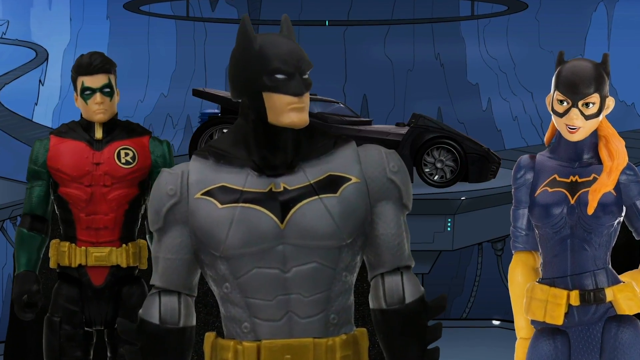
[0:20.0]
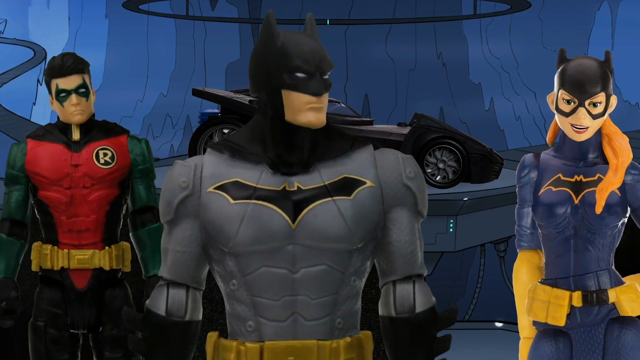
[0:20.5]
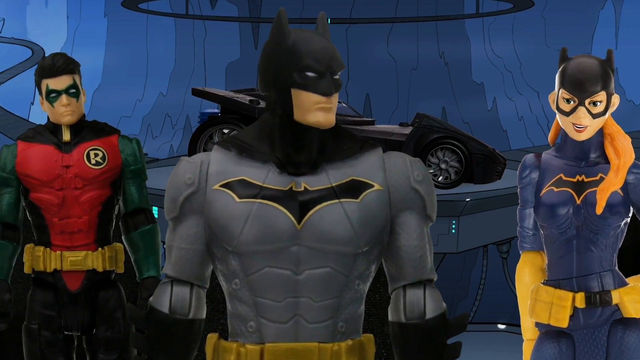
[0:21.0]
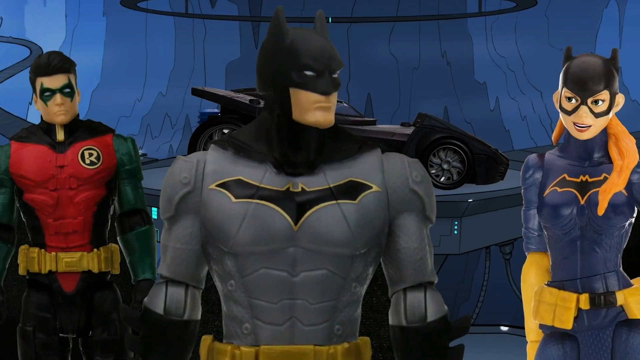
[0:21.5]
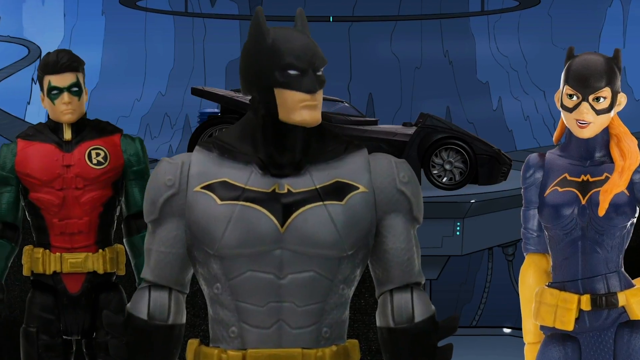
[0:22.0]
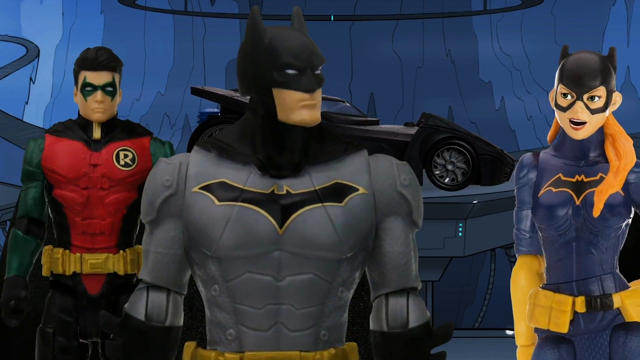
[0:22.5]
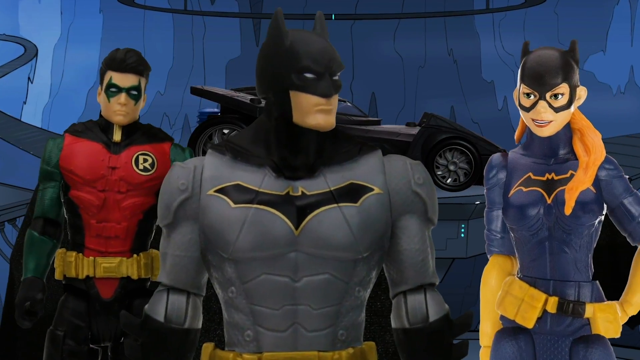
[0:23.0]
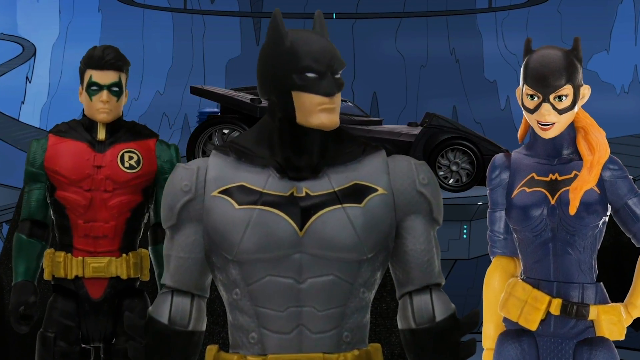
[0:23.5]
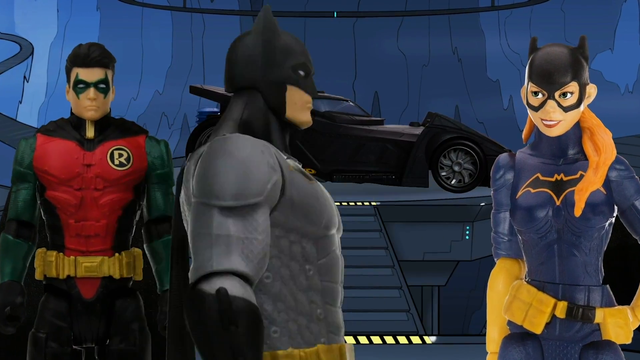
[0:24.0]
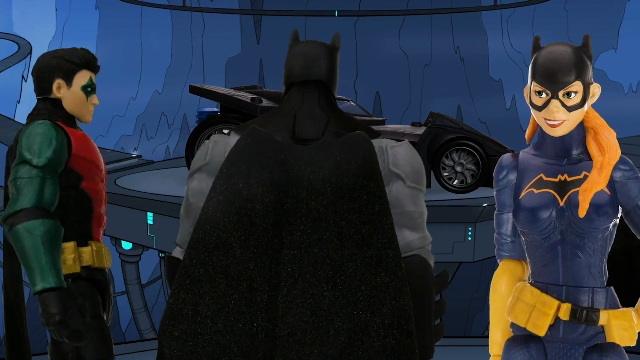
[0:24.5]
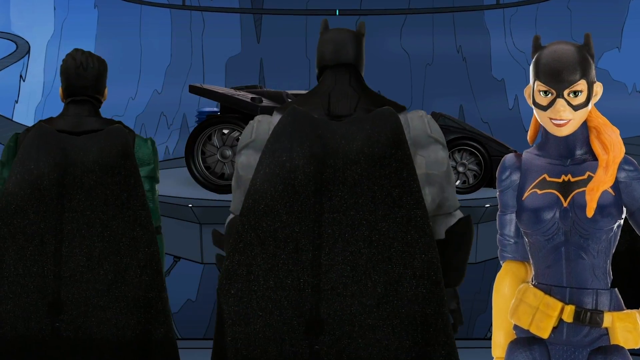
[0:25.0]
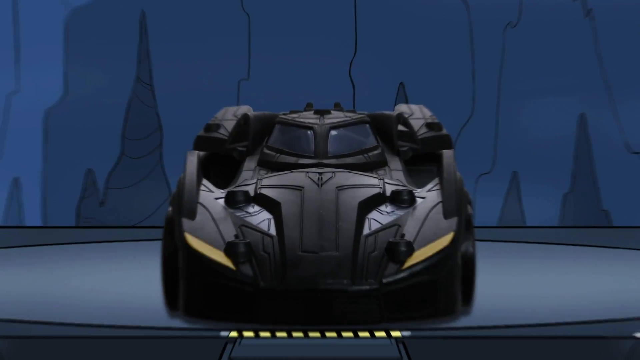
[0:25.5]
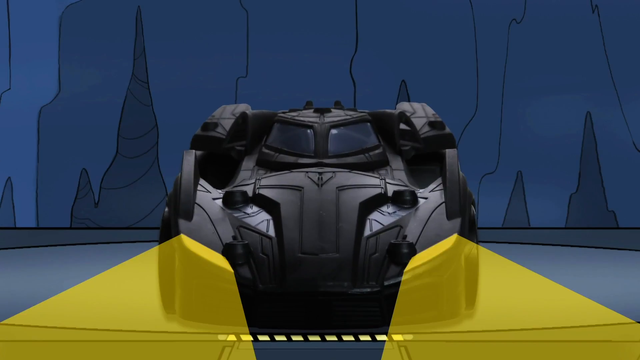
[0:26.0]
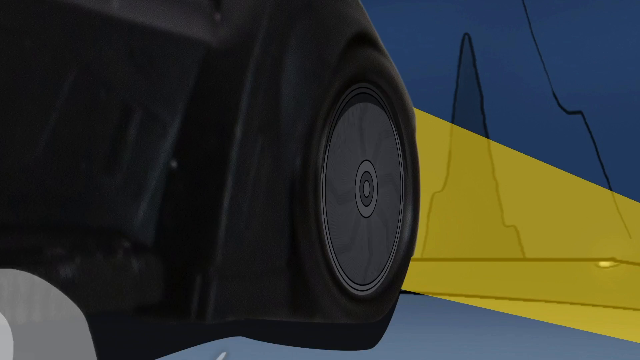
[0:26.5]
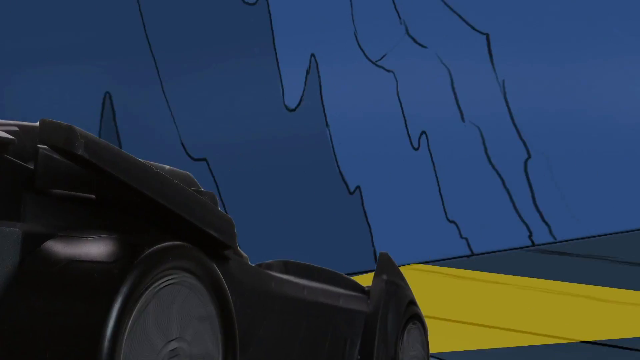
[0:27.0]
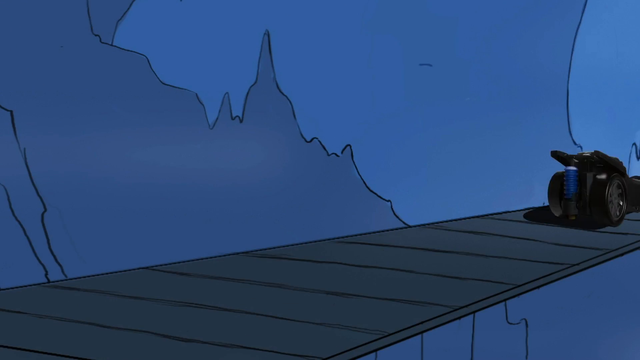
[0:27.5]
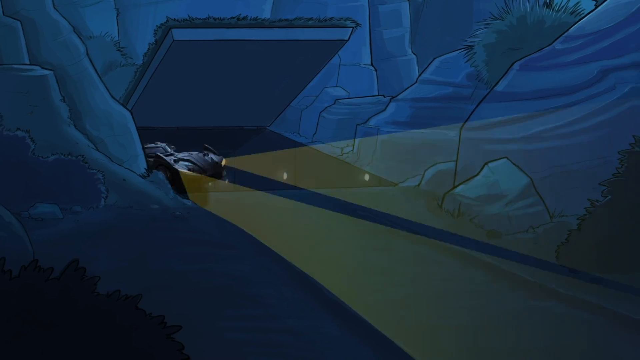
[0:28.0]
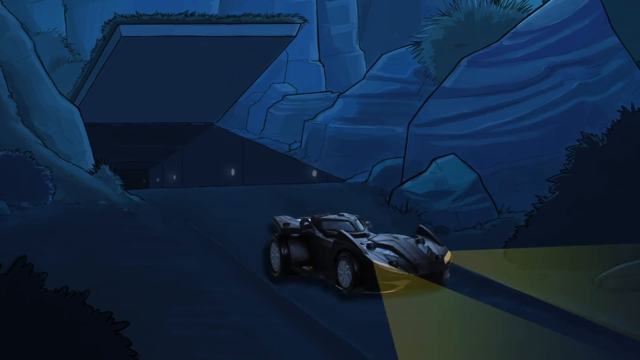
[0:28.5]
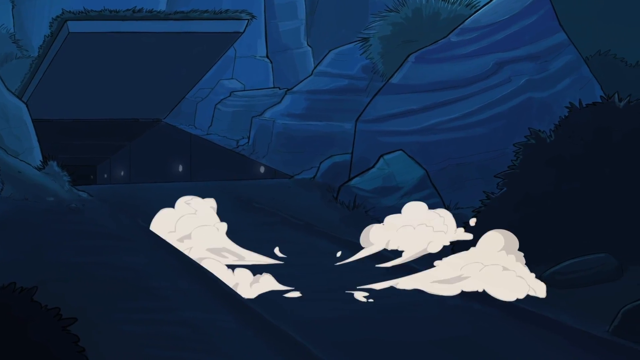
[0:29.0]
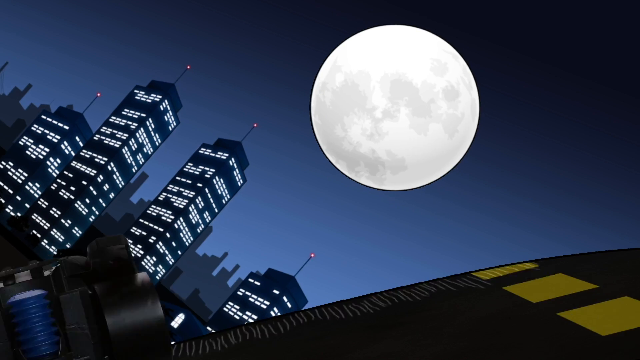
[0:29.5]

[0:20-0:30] Robin, Batman and Batwoman are in front of the Batmobile; they are all toys, and the Batmobile is a toy as well. Their mouth movements look like claymation or something similar, and Batwoman is seen talking. The view turns around, the lights at the end of the Batmobile turn on, and they drive off. The Batmobile is a toy, but the background is all 2D. The car drives on the road toward the moon, and little puffs of smoke come out of it as it turns and makes a jump, with the animation showing the car moving. Lights turn on, which are also a drawing. The car drives on the road toward Gotham City, where lights are on in the skyscrapers, and a full moon is in the background.